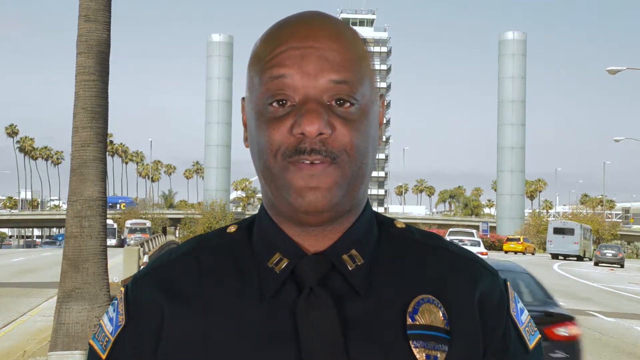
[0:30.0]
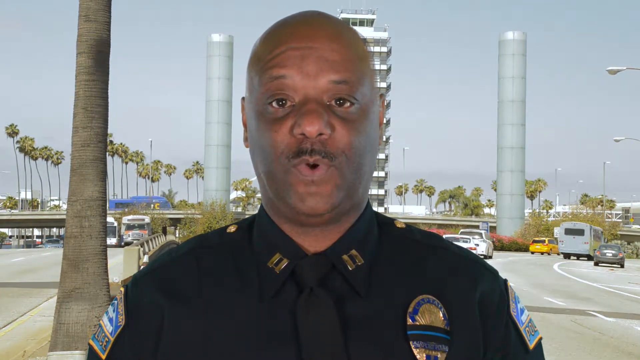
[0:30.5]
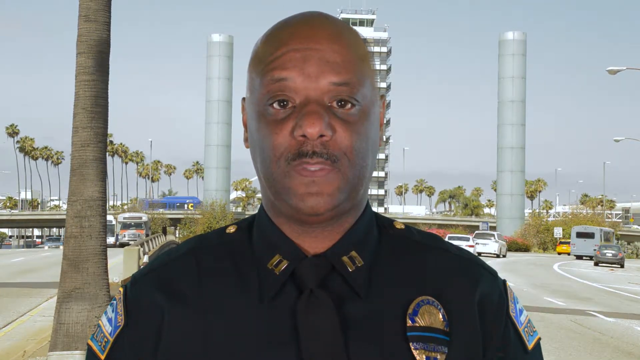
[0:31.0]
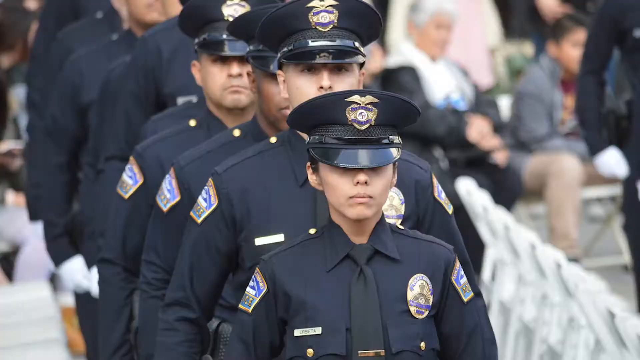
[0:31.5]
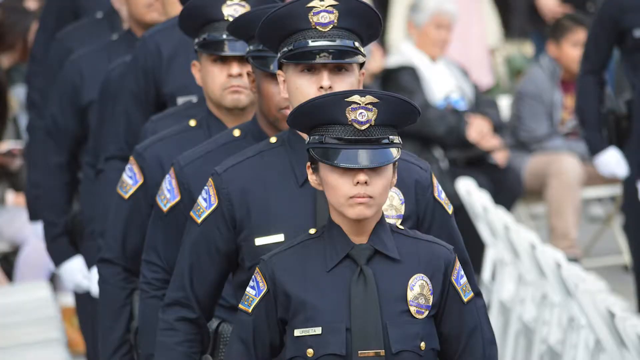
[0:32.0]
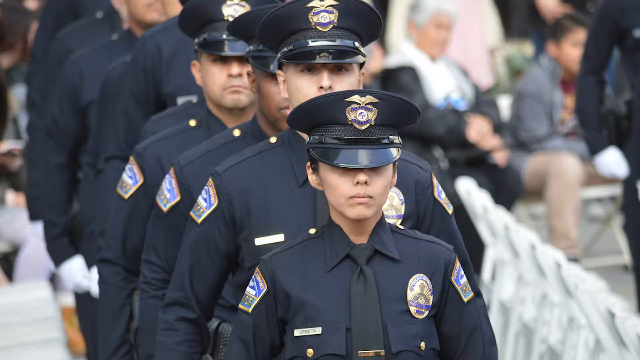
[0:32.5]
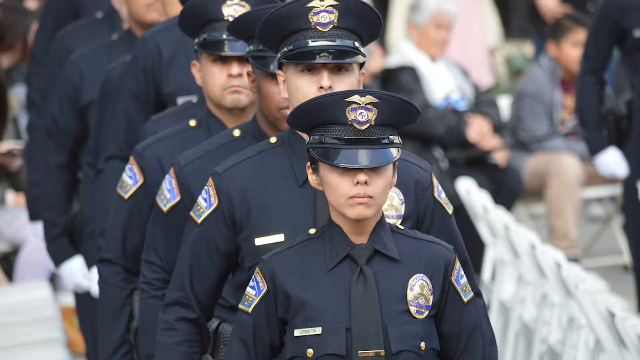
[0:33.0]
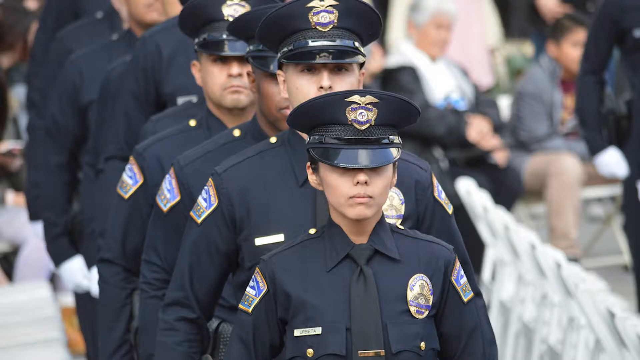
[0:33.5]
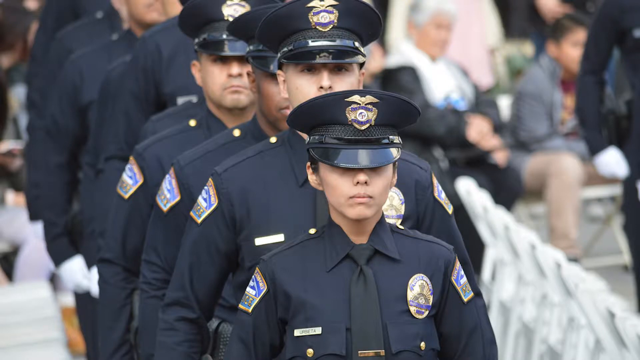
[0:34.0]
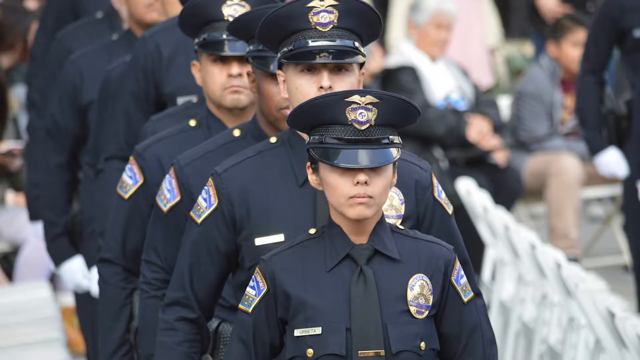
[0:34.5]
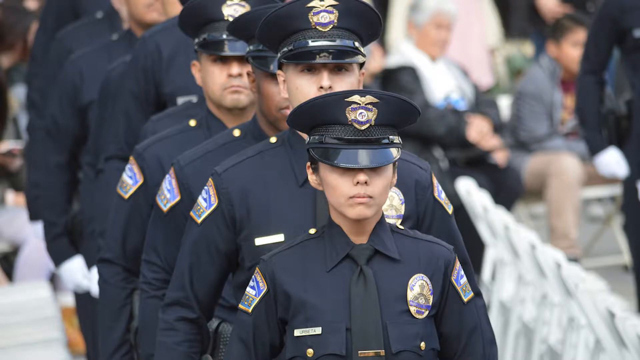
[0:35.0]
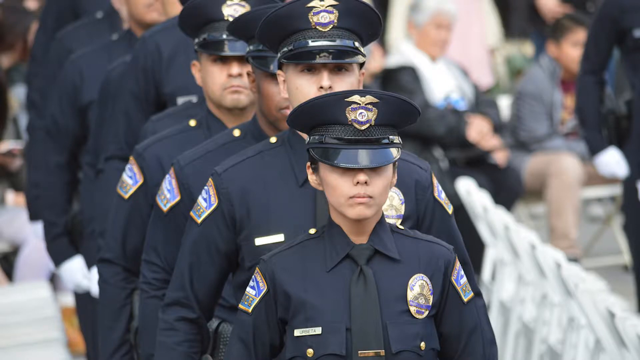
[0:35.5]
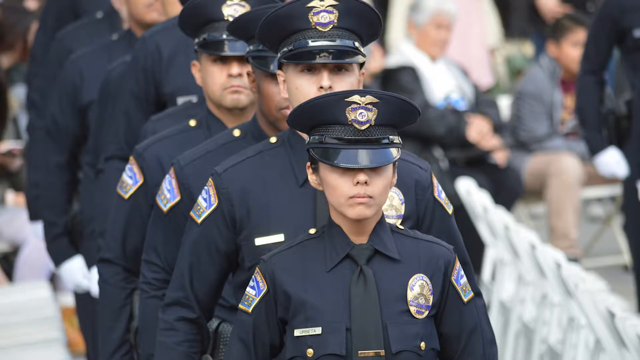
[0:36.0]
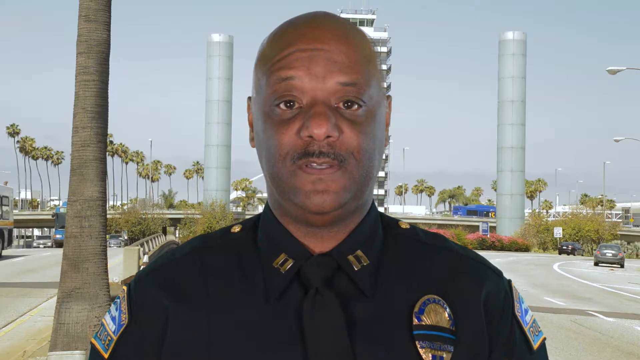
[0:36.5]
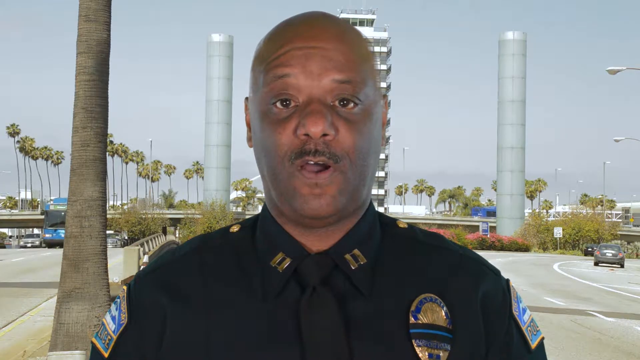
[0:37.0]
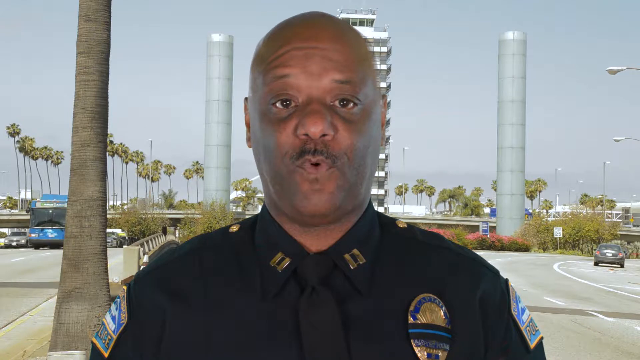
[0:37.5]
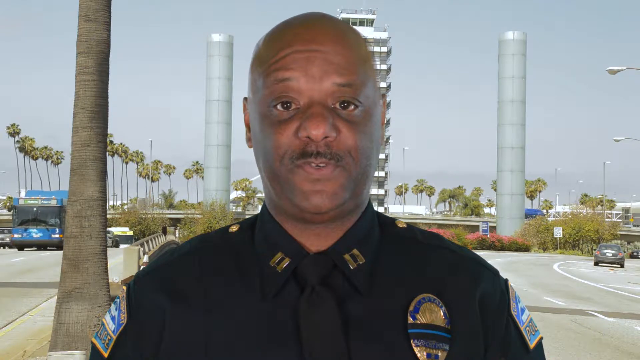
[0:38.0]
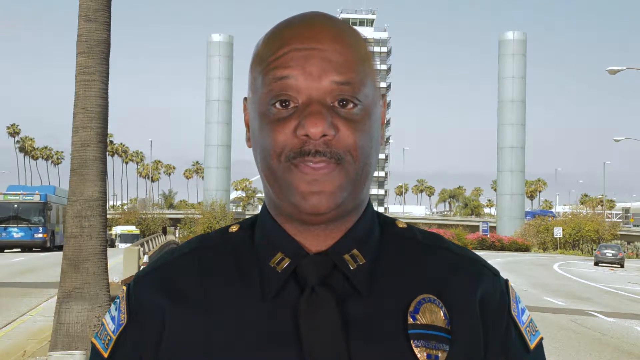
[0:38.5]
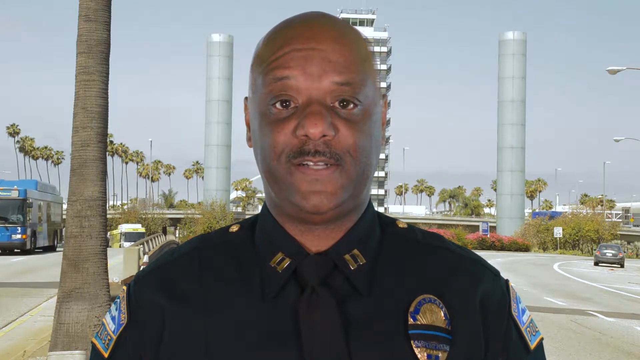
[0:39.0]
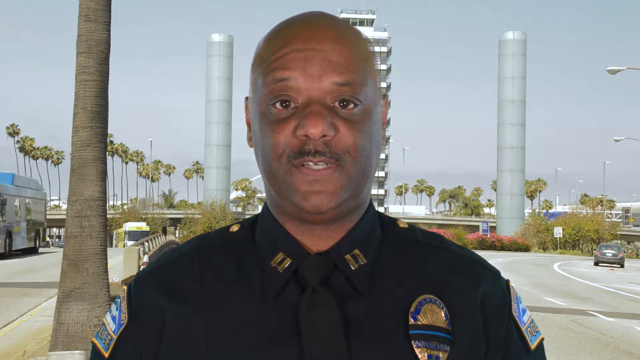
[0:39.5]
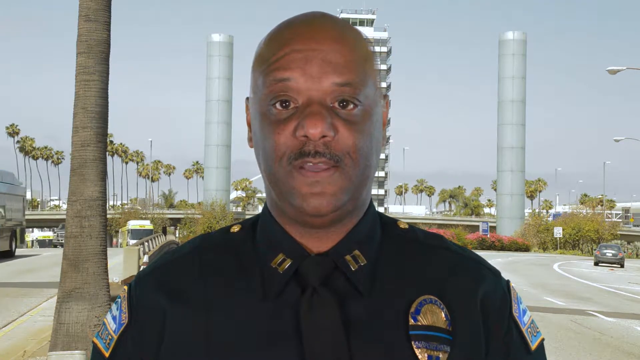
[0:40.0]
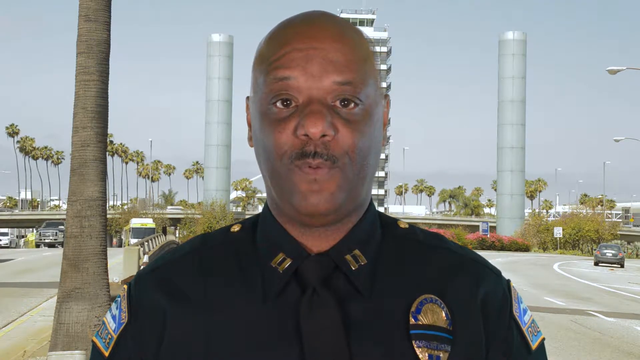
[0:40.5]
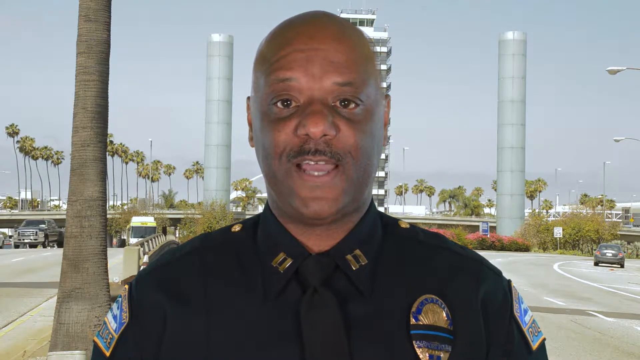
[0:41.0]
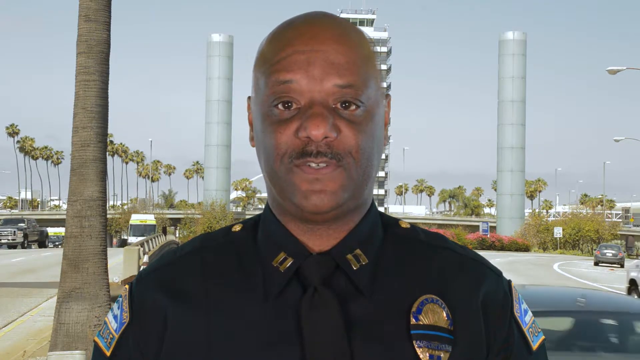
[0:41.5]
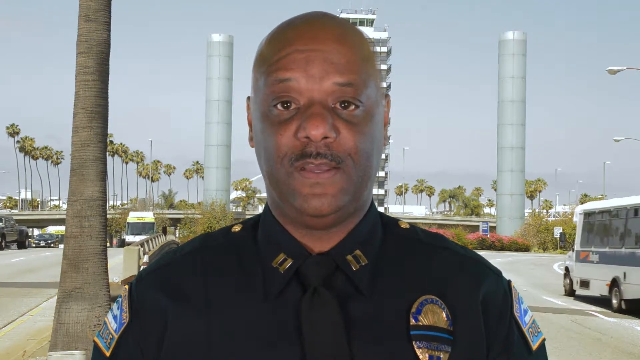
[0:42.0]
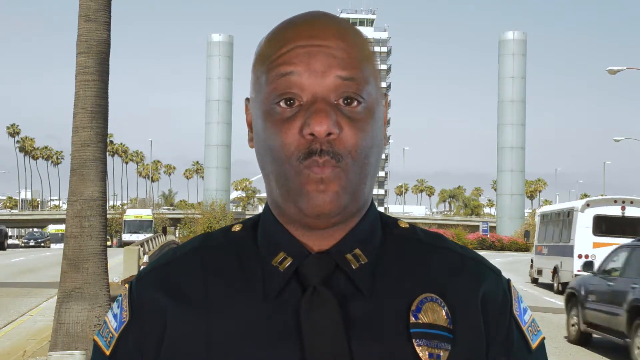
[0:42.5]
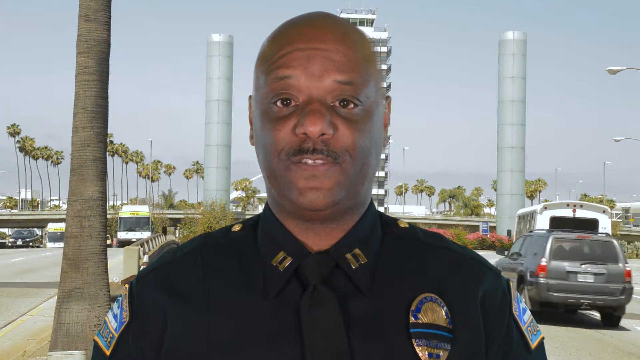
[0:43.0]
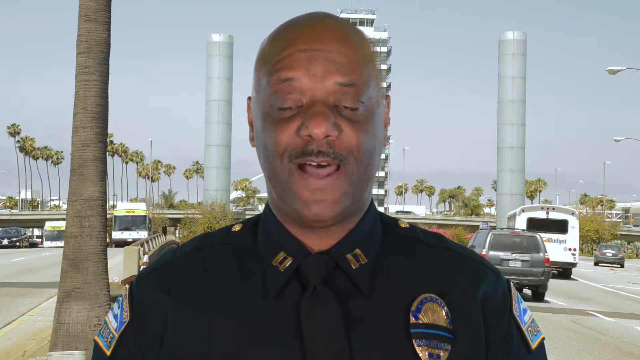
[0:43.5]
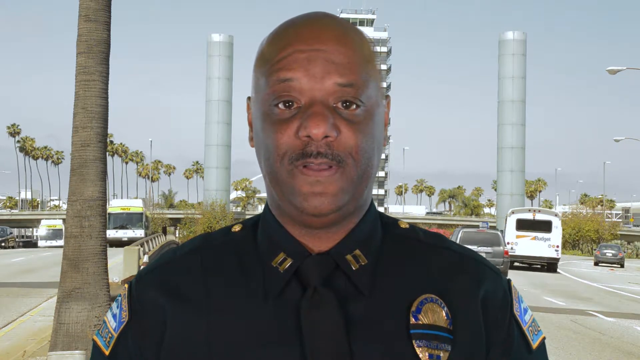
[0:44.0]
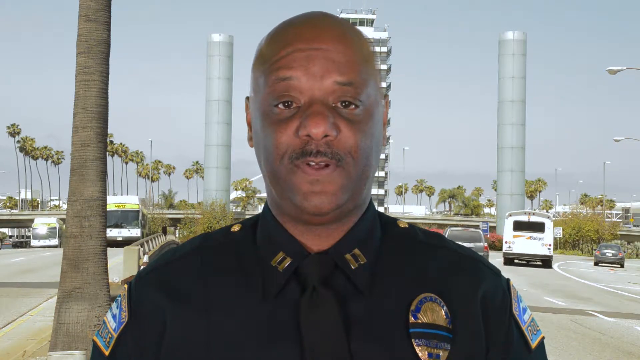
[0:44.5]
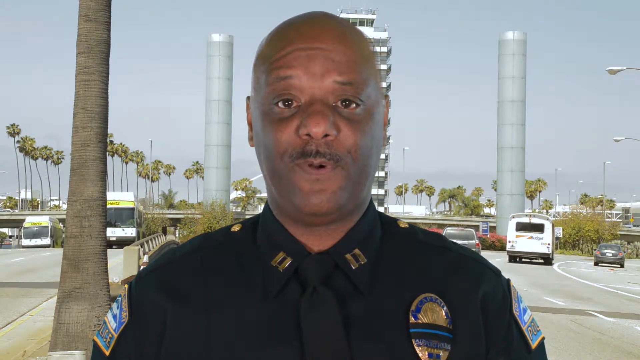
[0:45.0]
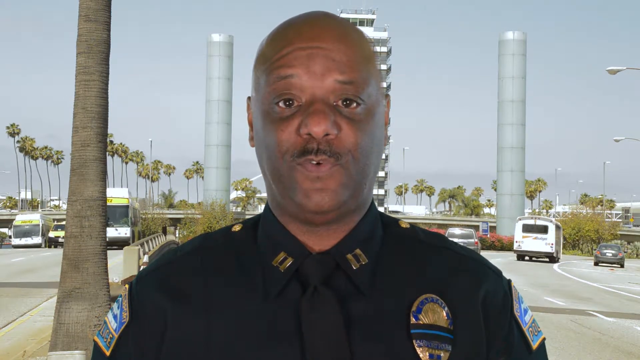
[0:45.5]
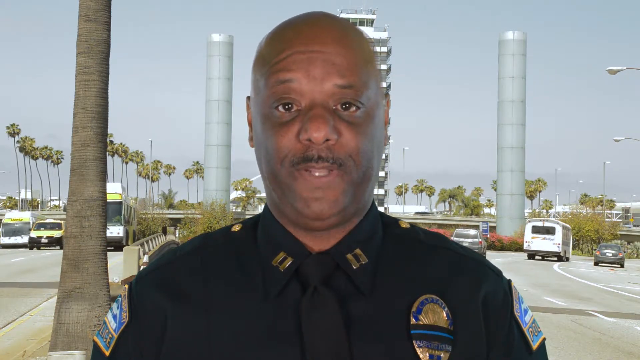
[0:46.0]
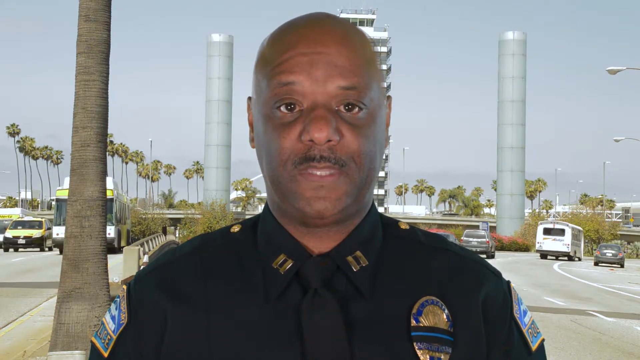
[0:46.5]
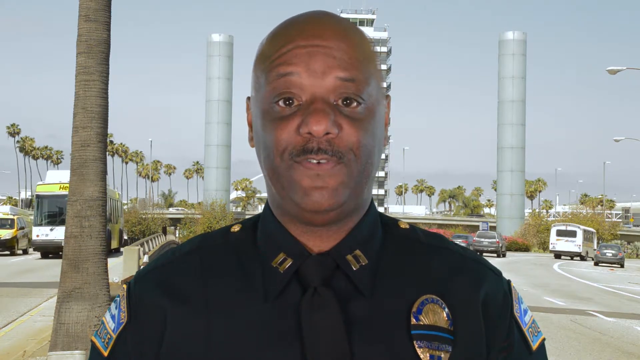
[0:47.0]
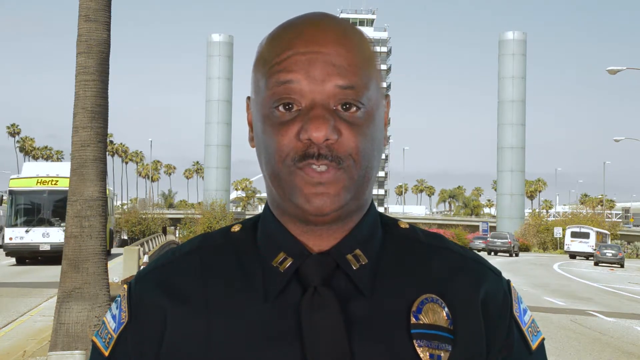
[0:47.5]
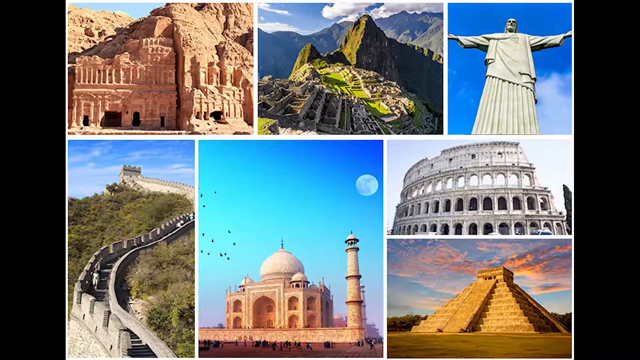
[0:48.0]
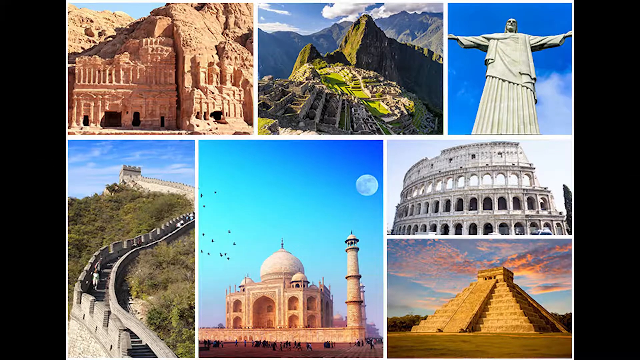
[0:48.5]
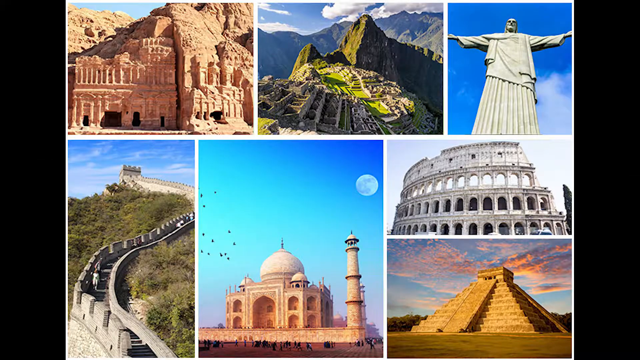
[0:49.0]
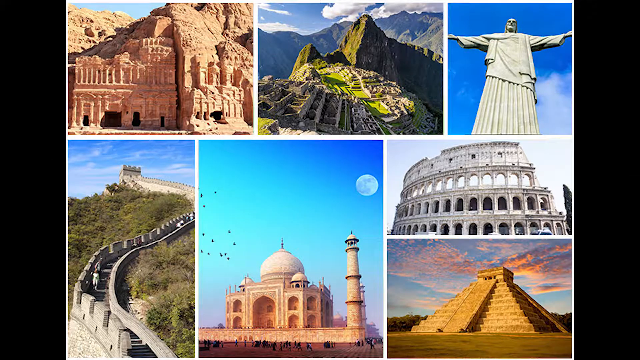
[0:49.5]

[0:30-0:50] The officer continues, his lips moving as vehicles drive by in the background. The video then shows officers lined up, all dressed in black with badges on their chests and black ties, wearing black crested caps with what looks like a bird and a badge on top in the middle. Some of the officers wear gloves. In the background, civilians are seated on white seats. The video returns to the officer standing as he talks, with buses and other vehicles moving in the background. Still images of various historic sites follow: the ruins of an old building, a mountain with clouds, ruins on a green island, a statue that looks like Jesus Christ with hands outstretched against a blue sky, and the Great Wall of China surrounded by green grass.